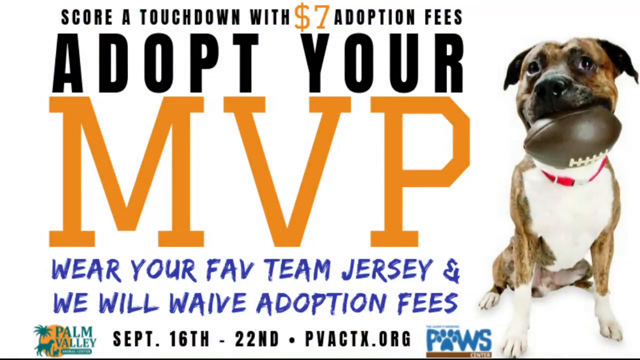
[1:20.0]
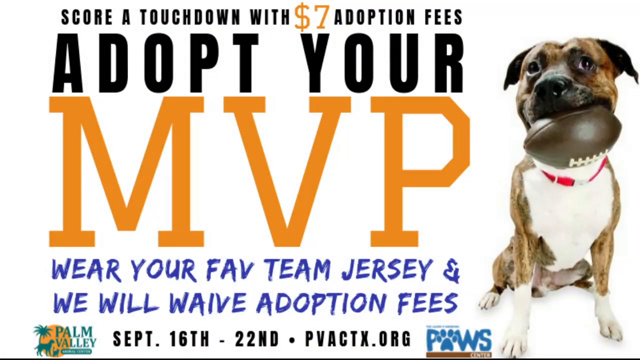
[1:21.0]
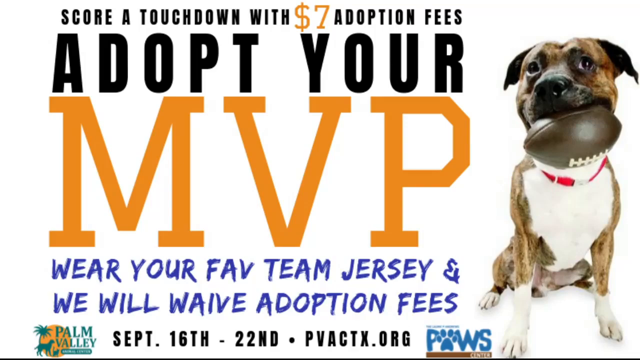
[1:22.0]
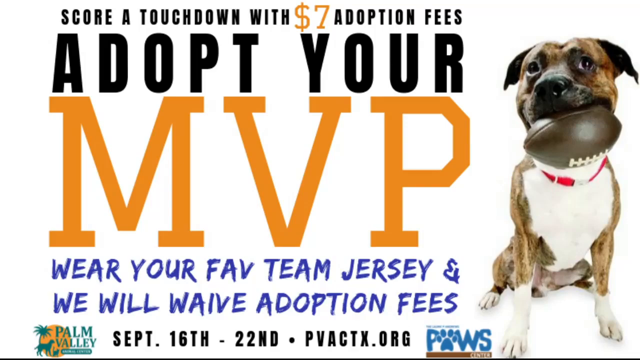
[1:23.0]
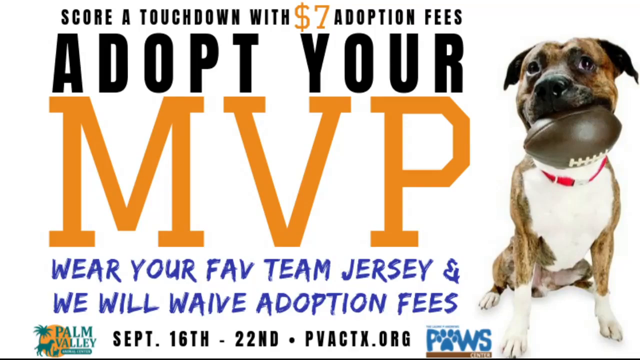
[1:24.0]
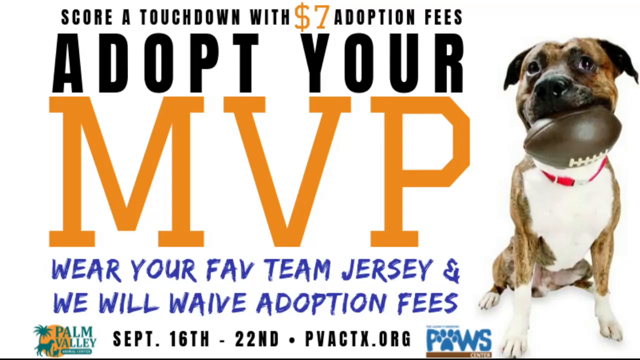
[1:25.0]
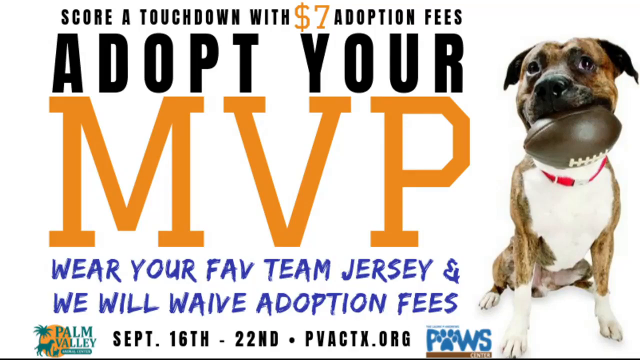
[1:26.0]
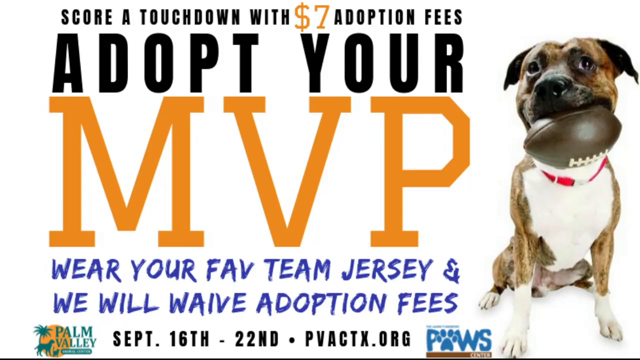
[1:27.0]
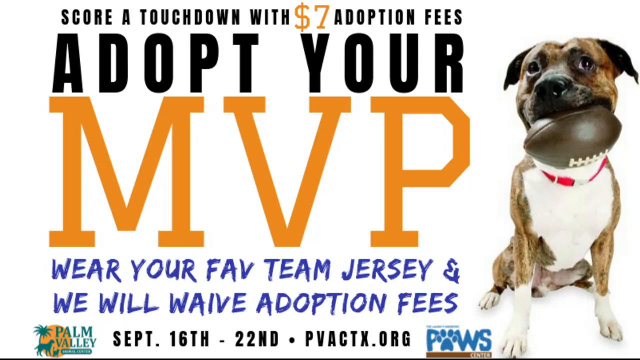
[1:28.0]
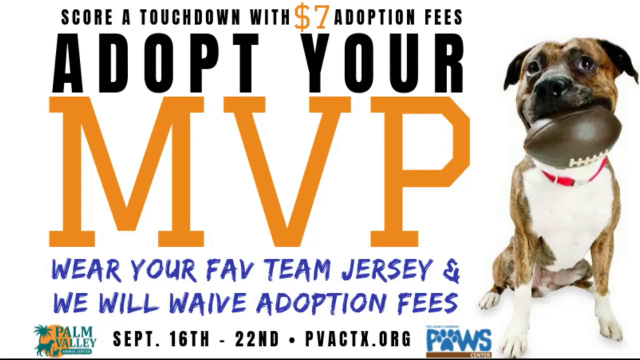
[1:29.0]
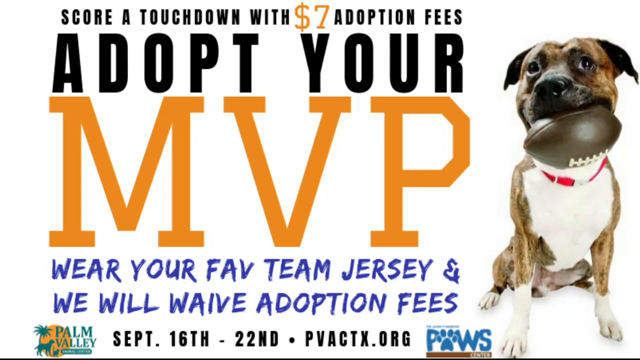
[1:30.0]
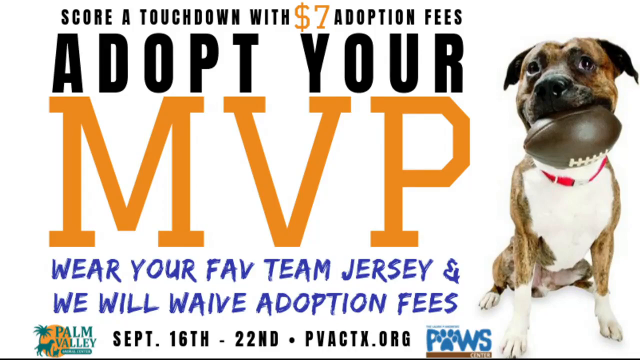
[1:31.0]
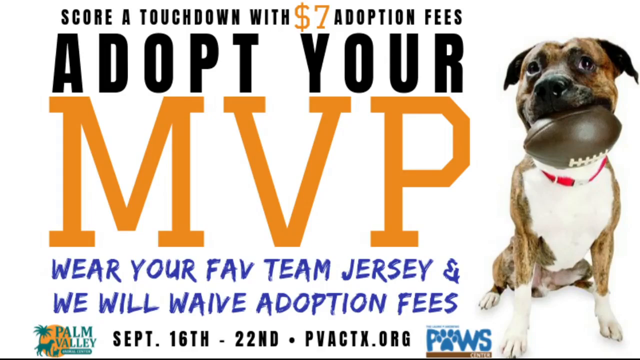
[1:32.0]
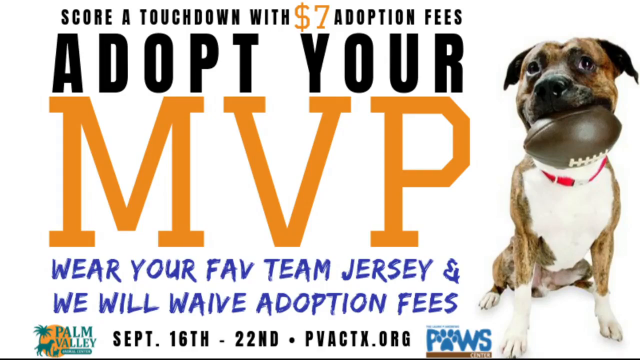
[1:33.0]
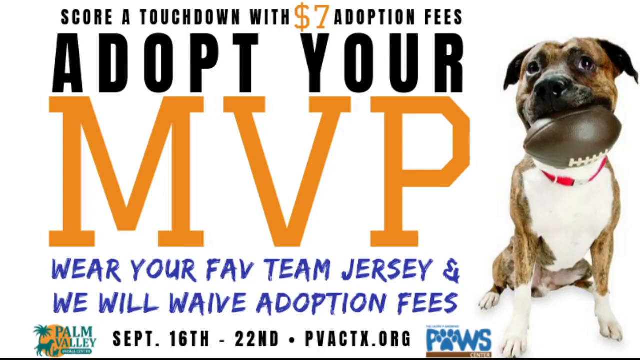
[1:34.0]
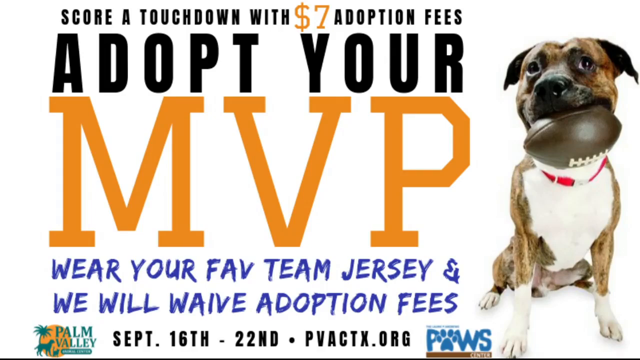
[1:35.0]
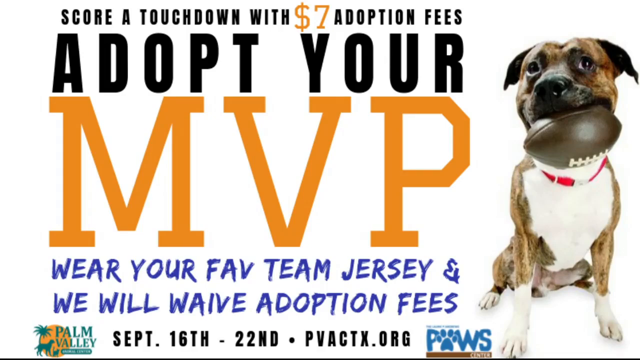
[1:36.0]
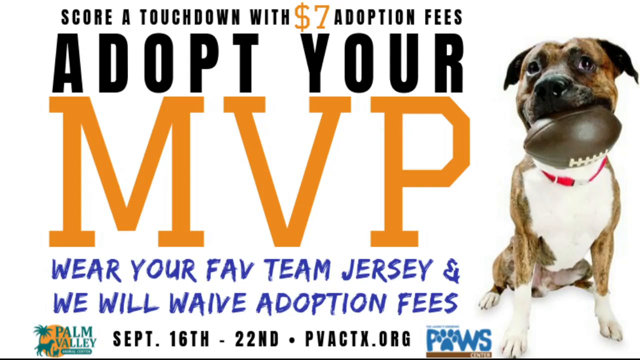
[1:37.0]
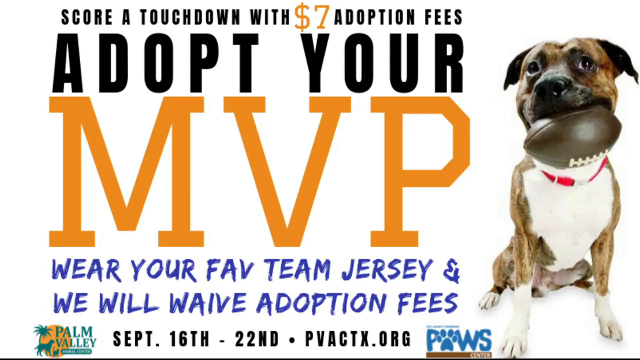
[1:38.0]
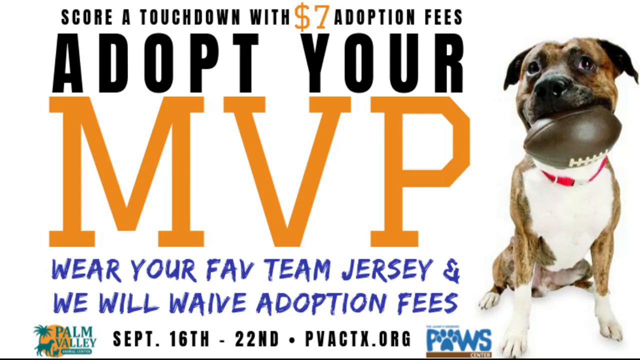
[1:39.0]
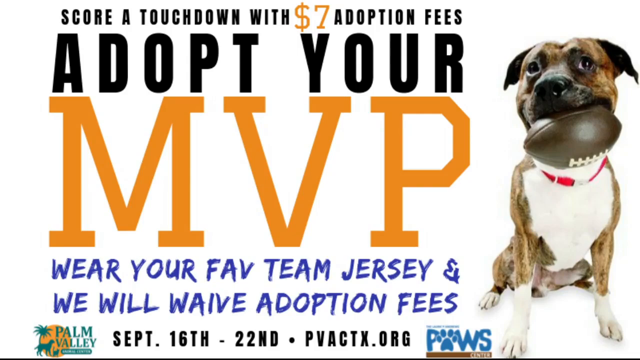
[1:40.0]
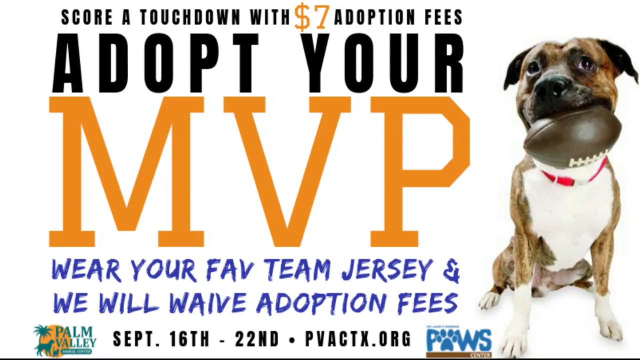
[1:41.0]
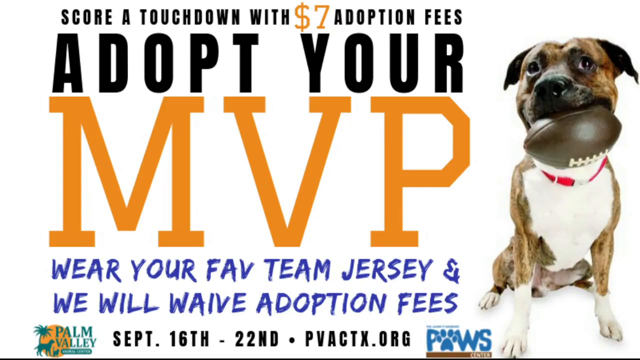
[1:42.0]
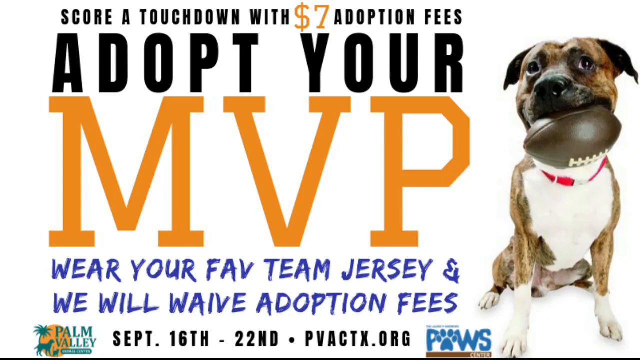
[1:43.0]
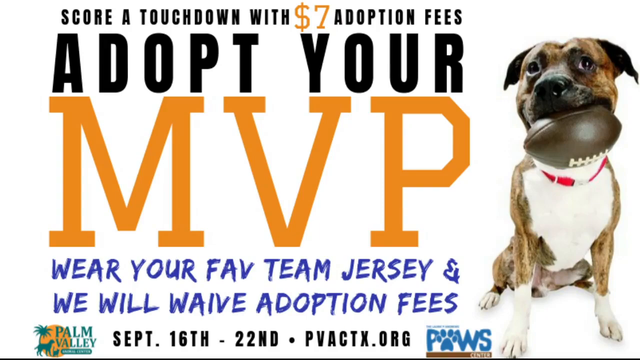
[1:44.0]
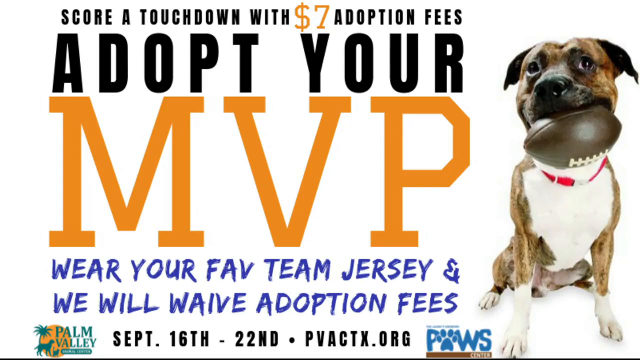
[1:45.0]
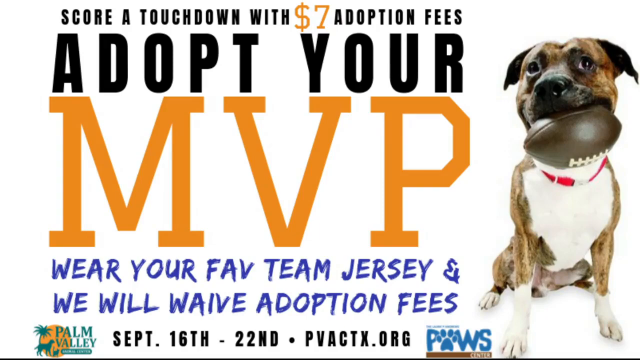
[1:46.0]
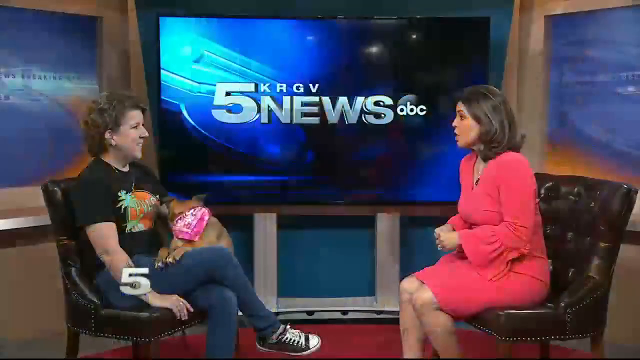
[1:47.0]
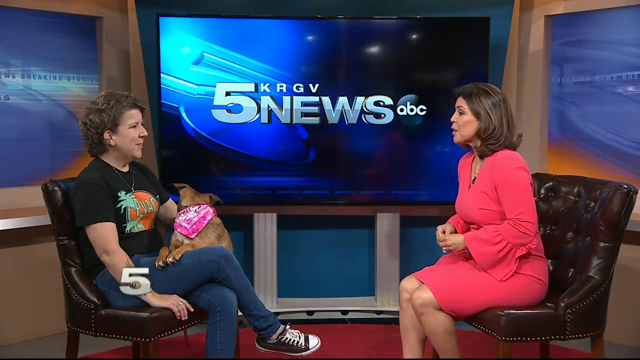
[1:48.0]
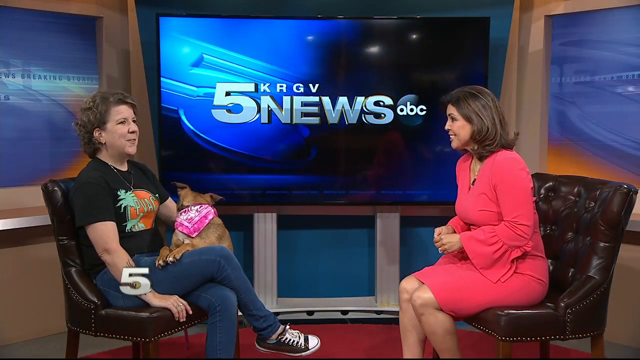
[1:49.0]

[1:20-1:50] The ad continues, showing the dates September 16th to 22nd and the website "pvacx.org". On the right side of the screen is a picture of a pit bull holding a football in its mouth and wearing a red collar. The video then returns to the dog owner and the news anchor. The dog looks back toward its tail, apparently smelling the owner's left hand or arm, then slowly turns its head back around. The owner and the anchor keep talking to each other without using hand gestures, nodding their heads and smiling at each other.